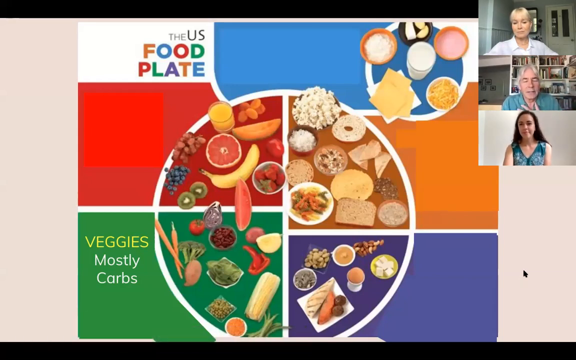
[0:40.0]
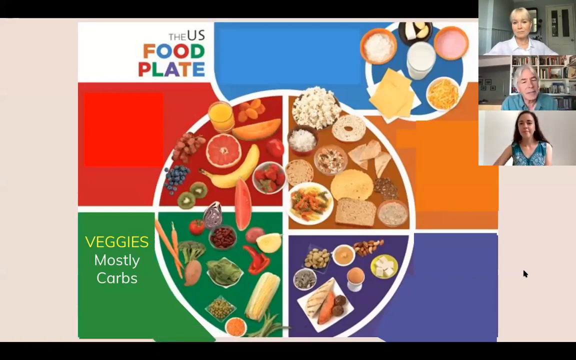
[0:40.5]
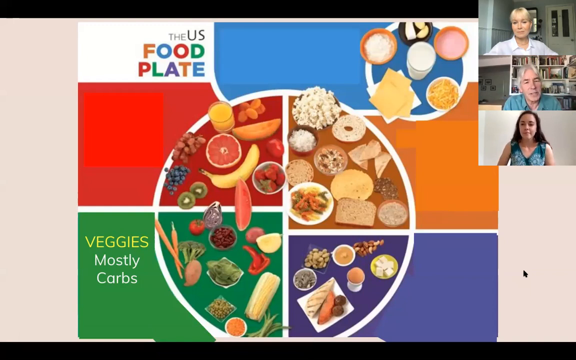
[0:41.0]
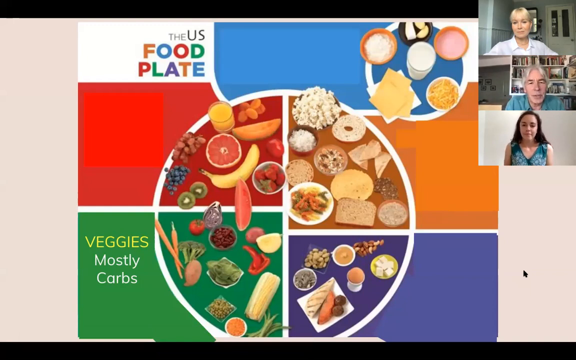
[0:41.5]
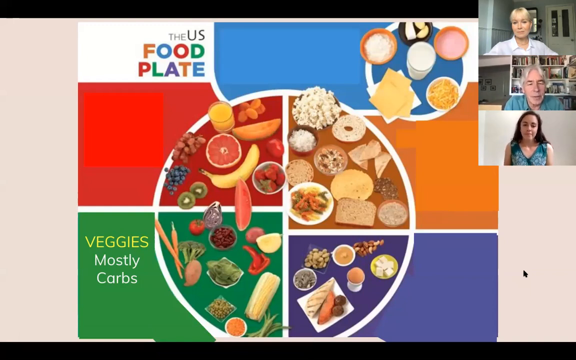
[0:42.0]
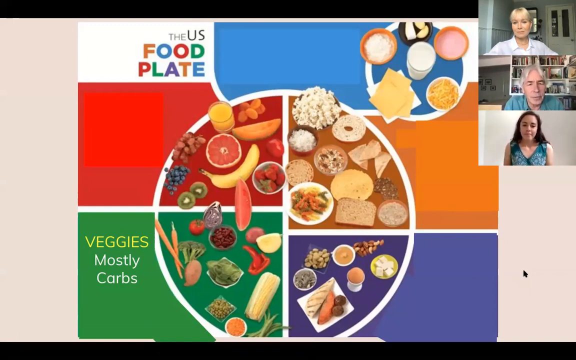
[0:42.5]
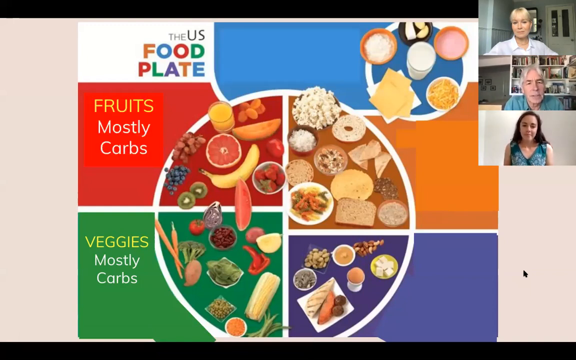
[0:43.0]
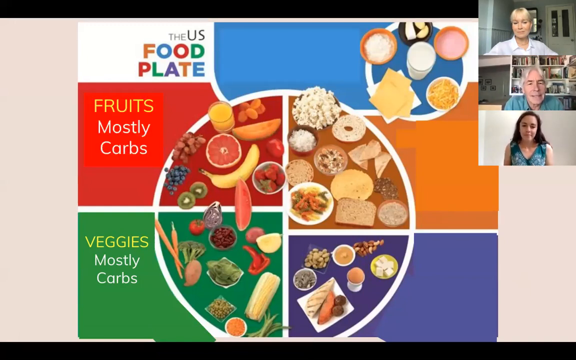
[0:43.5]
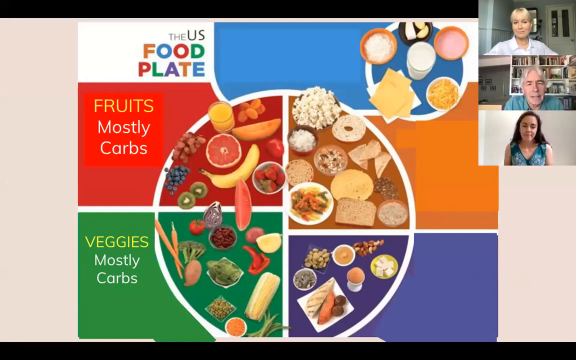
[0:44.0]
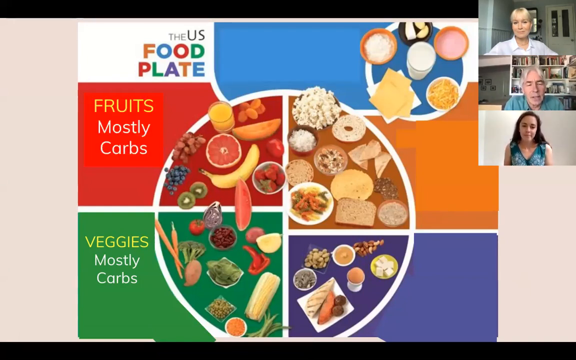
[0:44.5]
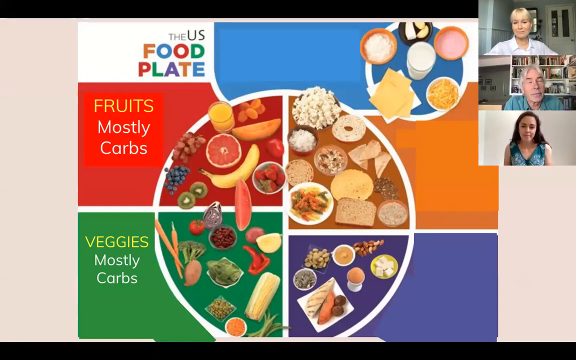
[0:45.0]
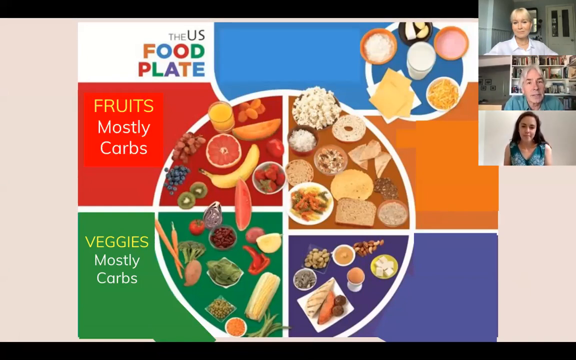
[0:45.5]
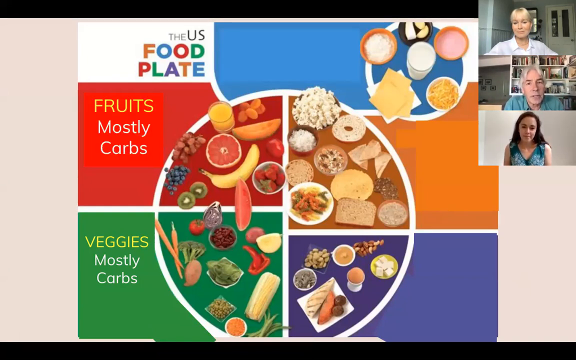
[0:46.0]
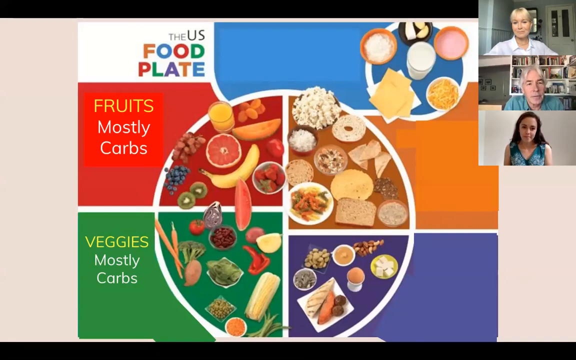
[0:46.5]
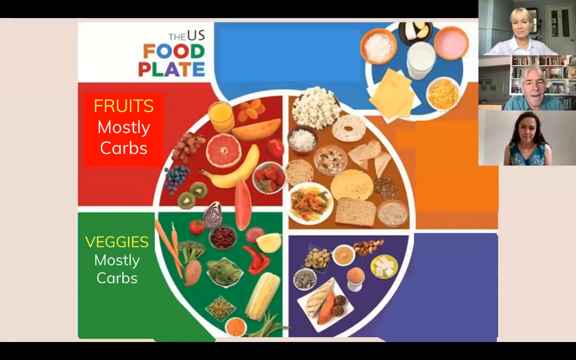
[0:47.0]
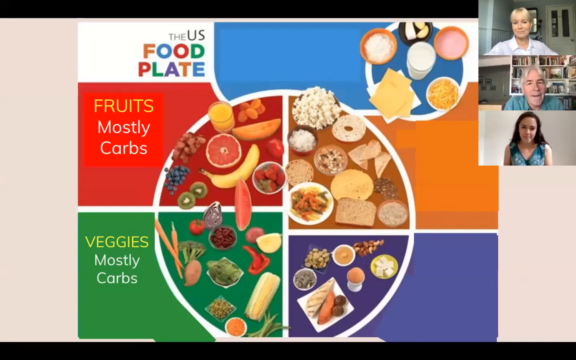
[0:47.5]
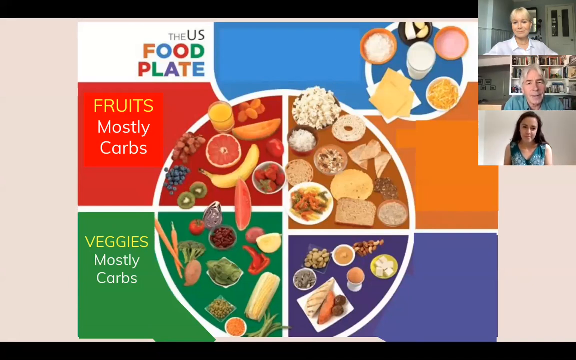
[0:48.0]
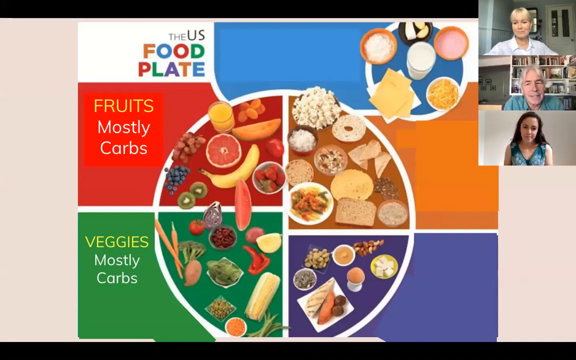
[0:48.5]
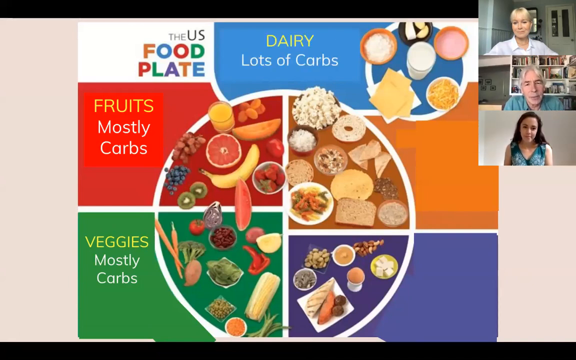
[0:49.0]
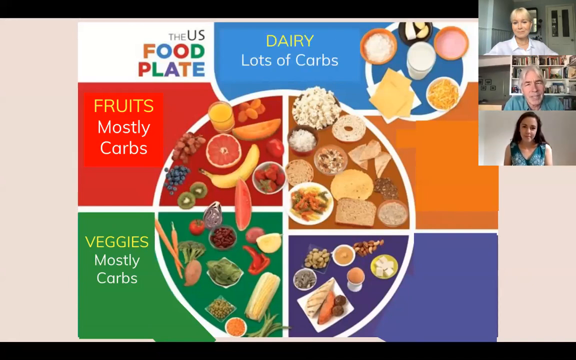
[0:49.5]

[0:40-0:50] A chart, poster, or graphic takes up the majority of the frame in the center of the screen. It says "the U.S. food plate" at the top left, and at the bottom center it shows a big circle divided into four segments: red, orange or brown, purple, and green. To the left of the green segment, green text reads "veggies, mostly carbs." The red segment contains a grapefruit, some orange juice, a banana, strawberries, a grape, and other fruits. The green segment contains corn, broccoli, and tomato. The orange segment shows different types of grains, such as bread, a tortilla shell, and a bagel. The purple segment shows meats such as chicken and fish and apparently also nuts, seemingly the protein segment. In the top right corner of the screen are three windows with different people. The top one is a Caucasian female with blonde hair and a white shirt. Below her is a Caucasian male with gray hair and a green shirt, who is talking. Below him is a Caucasian female with dark hair and a sleeveless green and white shirt, listening and nodding.